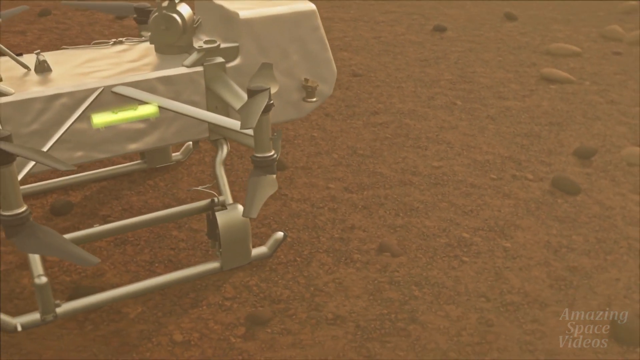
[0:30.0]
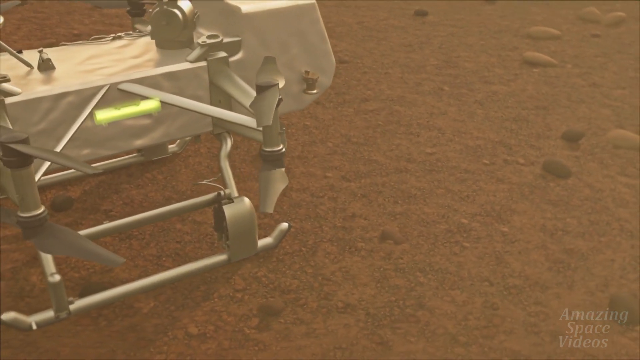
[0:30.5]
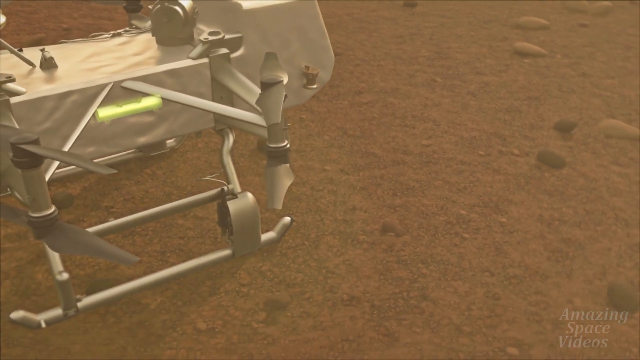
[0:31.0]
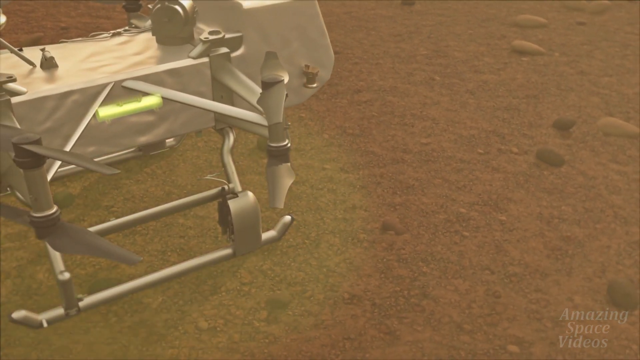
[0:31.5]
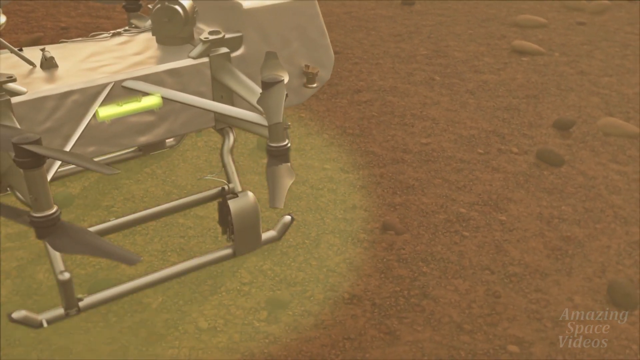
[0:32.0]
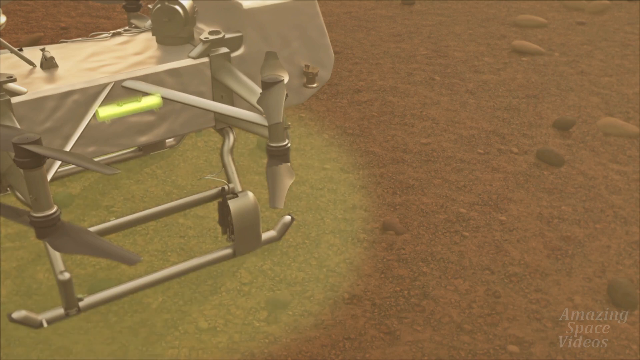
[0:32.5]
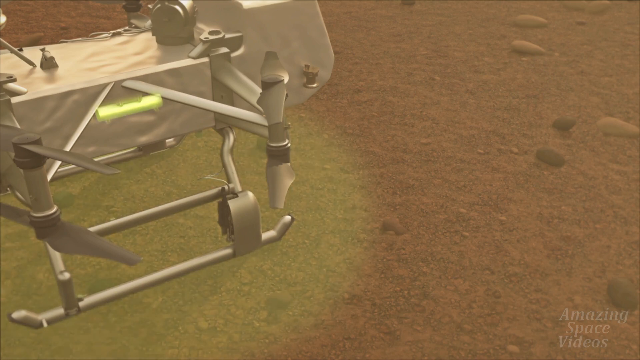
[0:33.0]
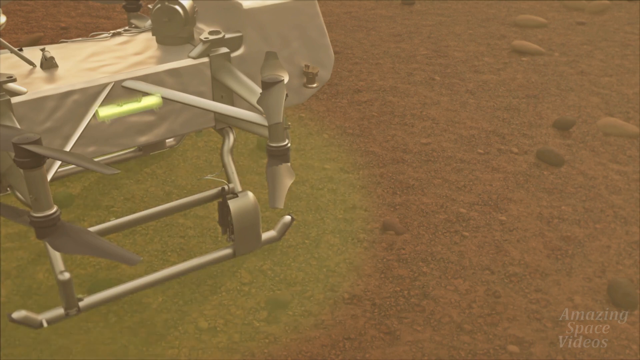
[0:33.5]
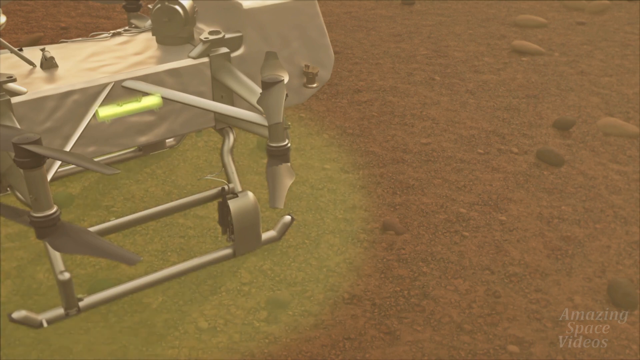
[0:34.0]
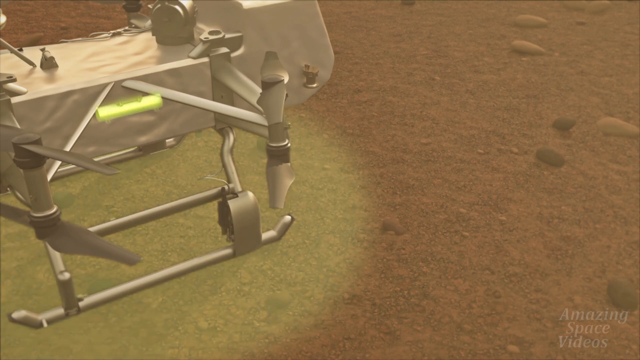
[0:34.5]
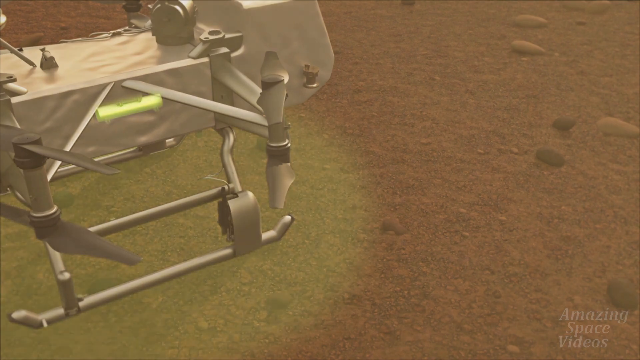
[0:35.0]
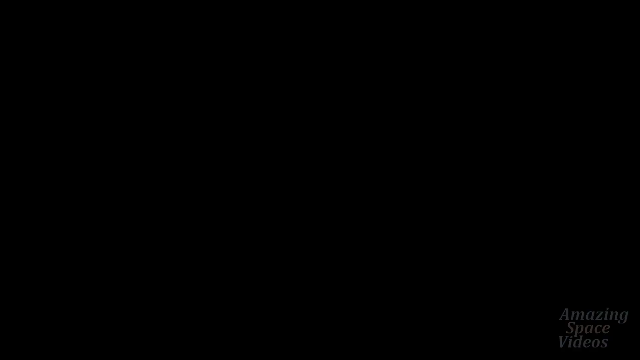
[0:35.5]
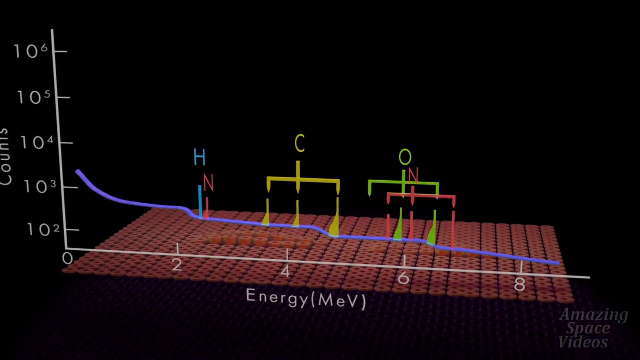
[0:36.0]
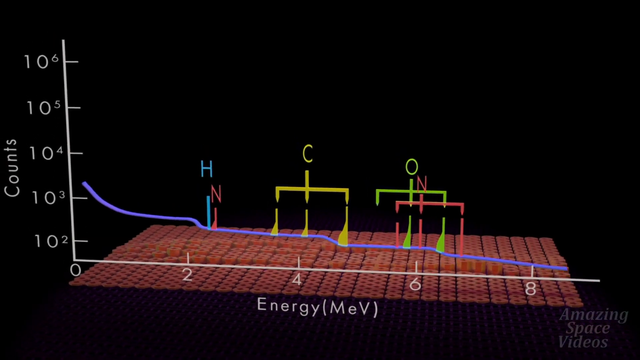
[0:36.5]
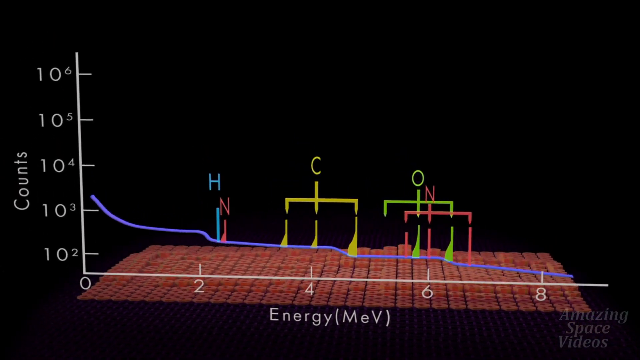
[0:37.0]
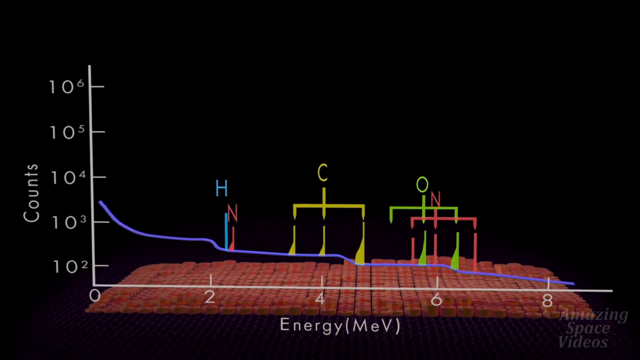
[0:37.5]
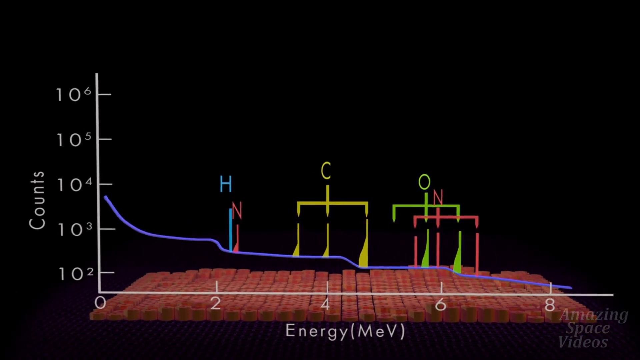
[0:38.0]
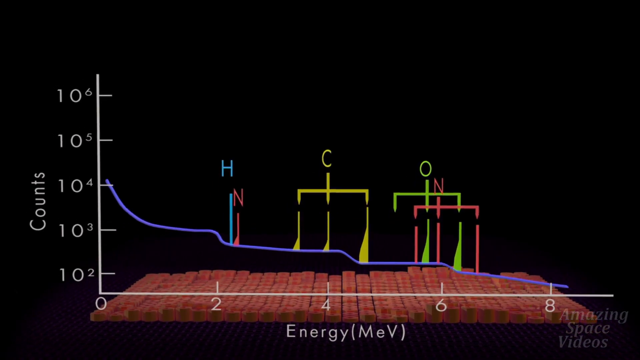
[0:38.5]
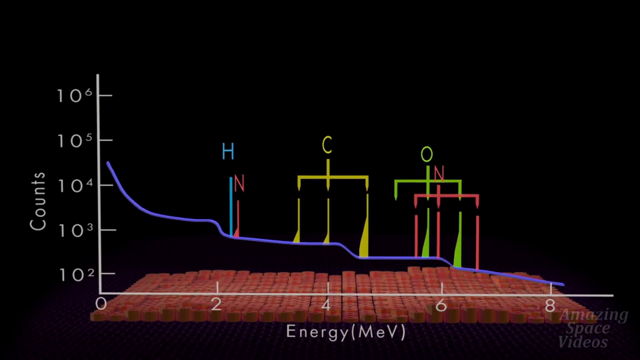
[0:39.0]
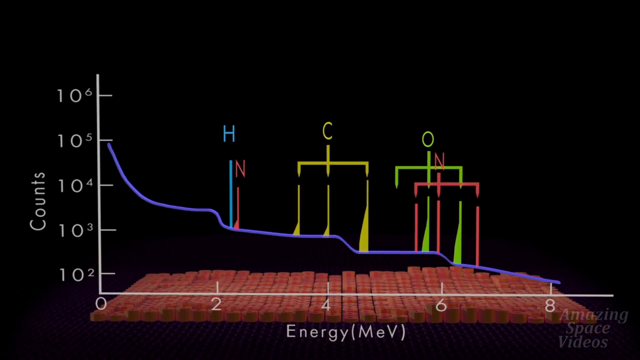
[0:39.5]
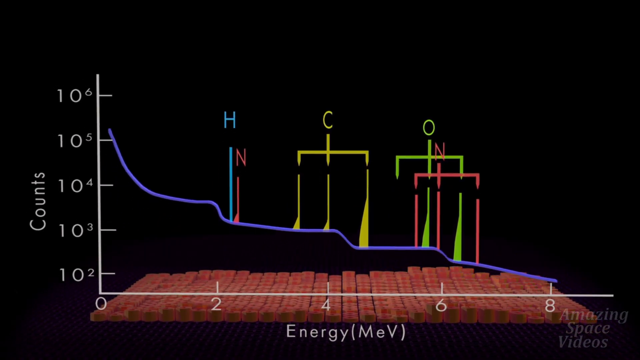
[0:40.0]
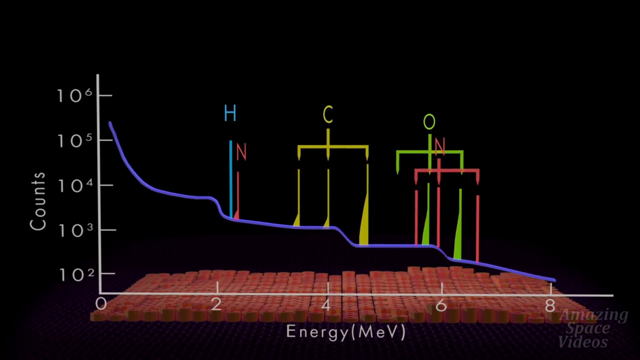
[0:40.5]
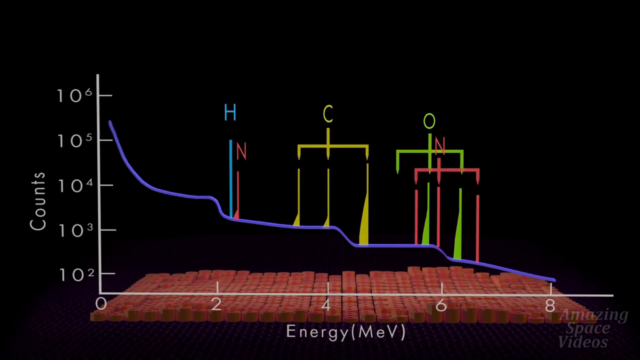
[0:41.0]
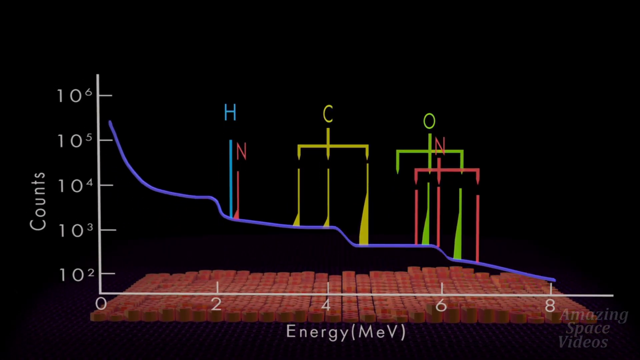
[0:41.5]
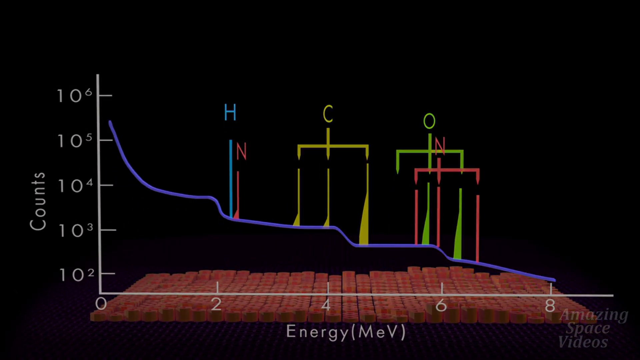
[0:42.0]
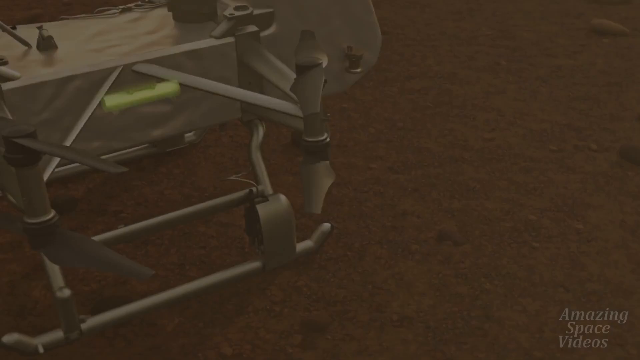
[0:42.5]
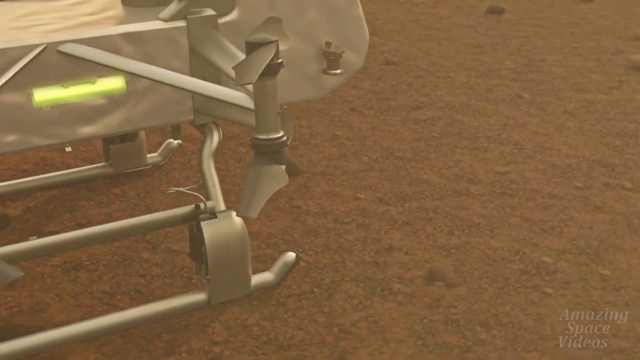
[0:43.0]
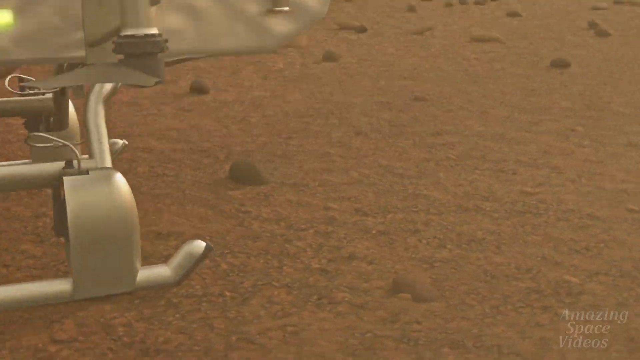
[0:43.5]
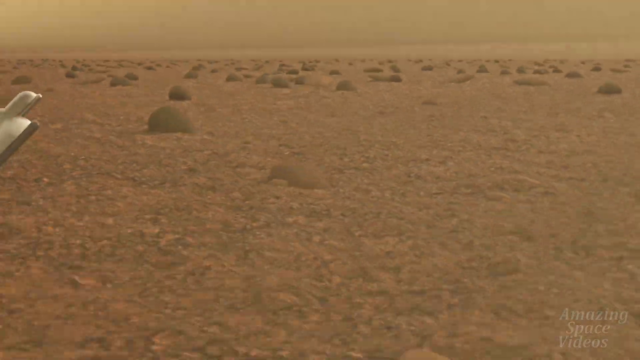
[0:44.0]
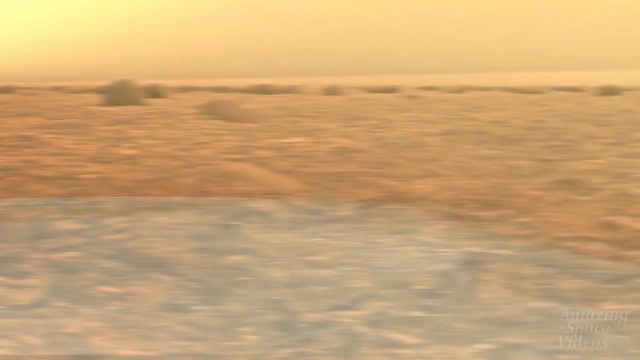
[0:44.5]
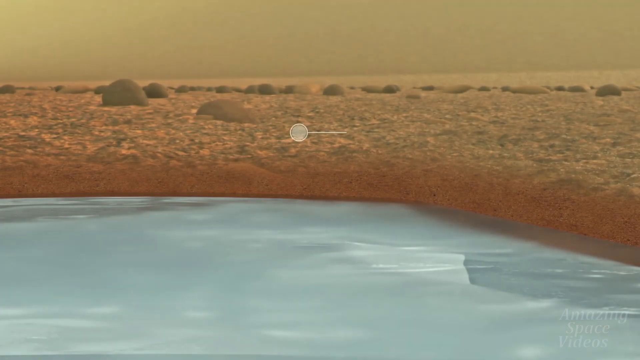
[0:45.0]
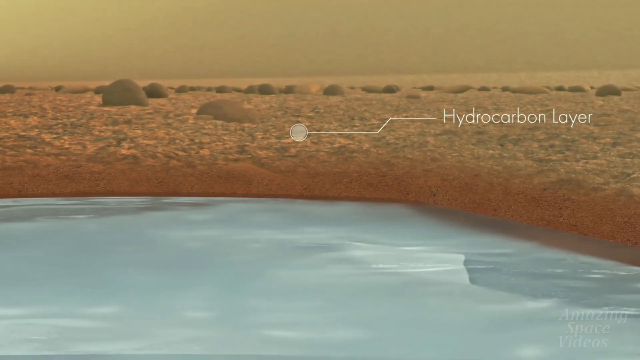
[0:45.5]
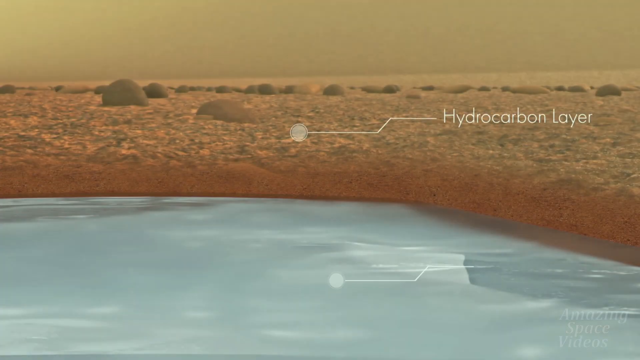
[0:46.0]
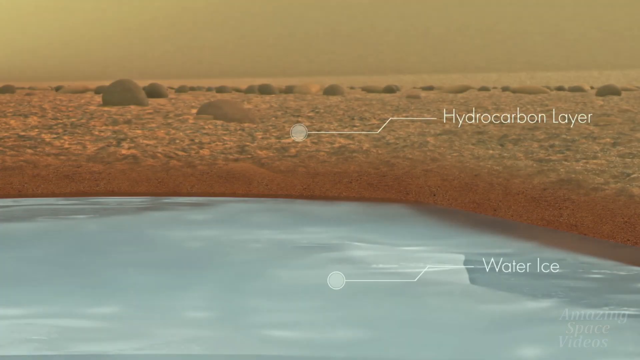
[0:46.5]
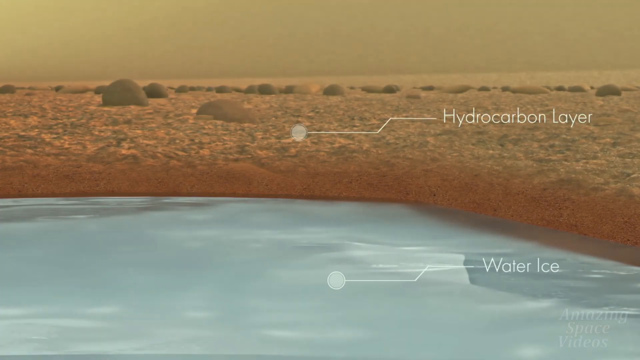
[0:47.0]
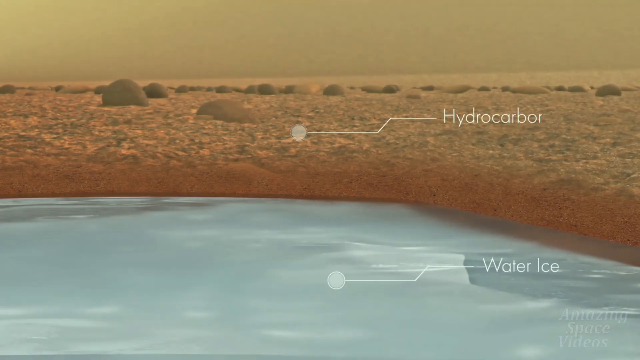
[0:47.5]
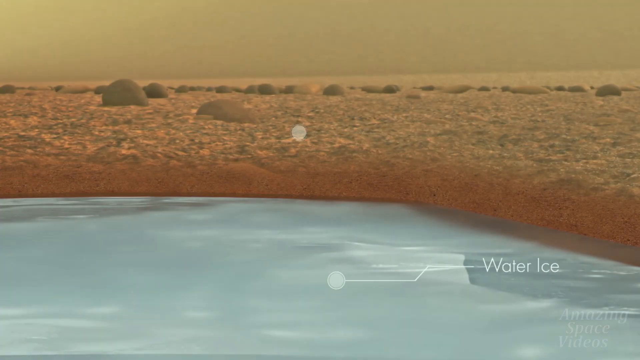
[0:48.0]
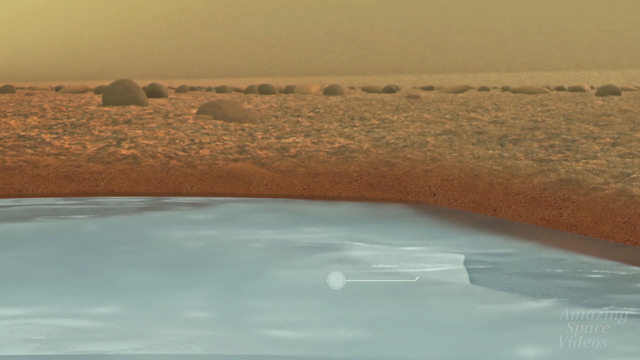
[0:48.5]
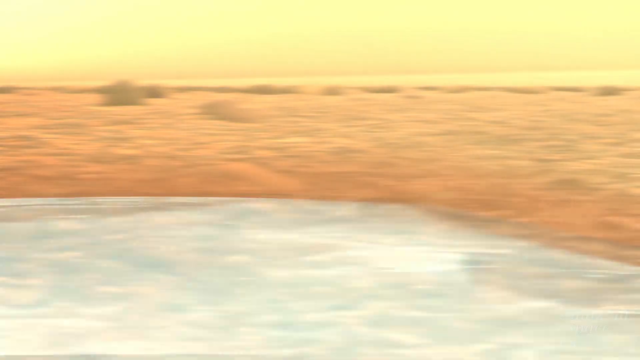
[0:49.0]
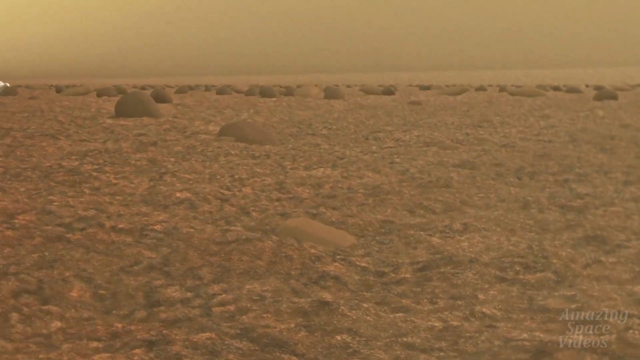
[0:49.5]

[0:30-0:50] A close-up shows a 3D drone landing on a set of two railings, one on each side, on a flat, sandy, dirt area. A yellow light starts flashing underneath the drone. The drone has multiple pillars folded in on themselves. The rendering then shows a chart: the left side shows counts and the bottom reads "energy MEV". A blue line runs from left to right, steadily declining. Multiple letters are labeled on the chart with lines pointing toward the line graph; the letters read "H", "N", "C", "O" and "N". The chart fades to black and the view cuts back to the drone. The camera quickly zooms in on the dirt in front of the drone. The dirt is shown up close, and a pool of blue water appears under the surface, labeled "water ice", with the surface labeled "hydrocarbon layer".